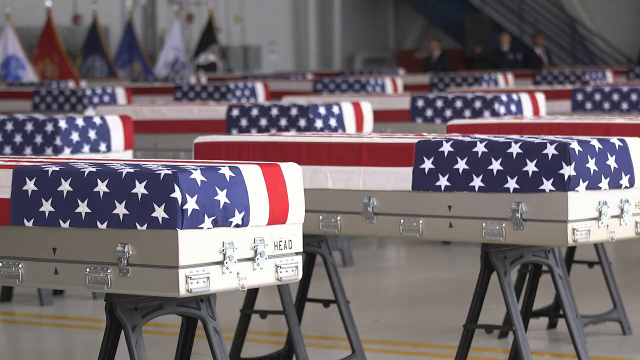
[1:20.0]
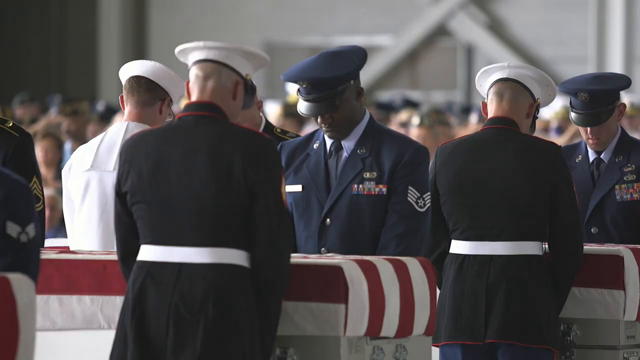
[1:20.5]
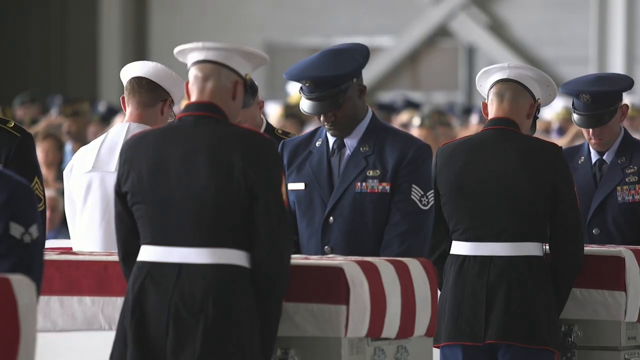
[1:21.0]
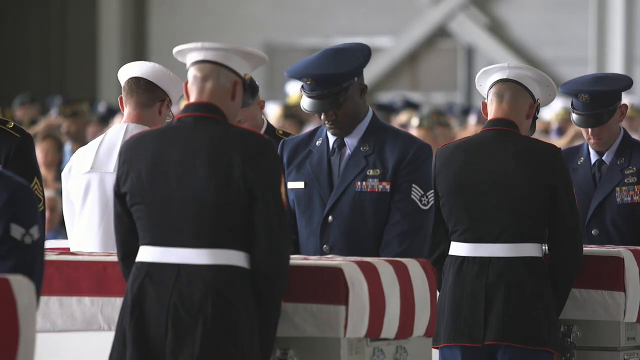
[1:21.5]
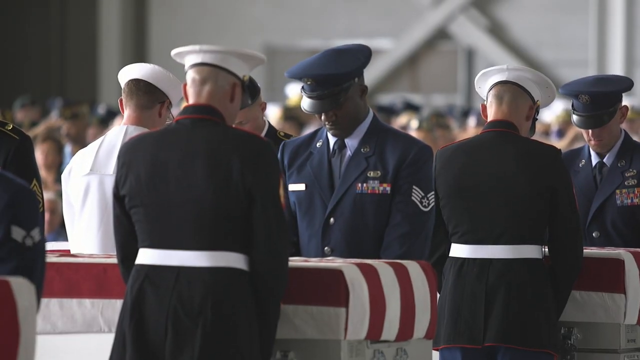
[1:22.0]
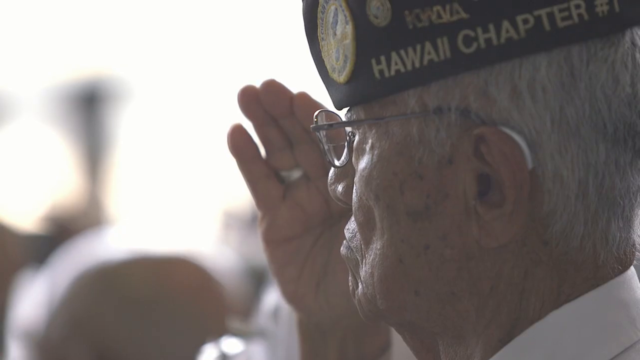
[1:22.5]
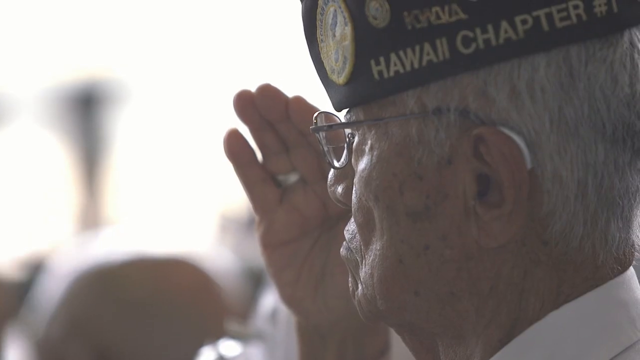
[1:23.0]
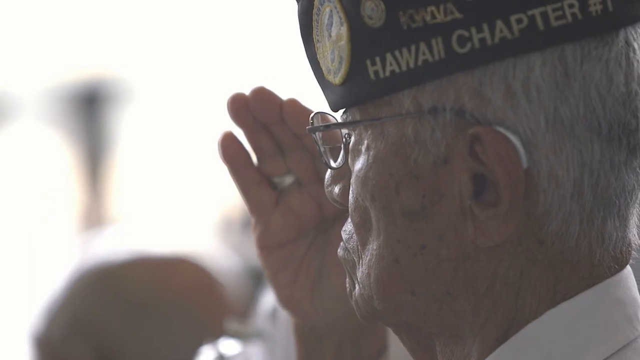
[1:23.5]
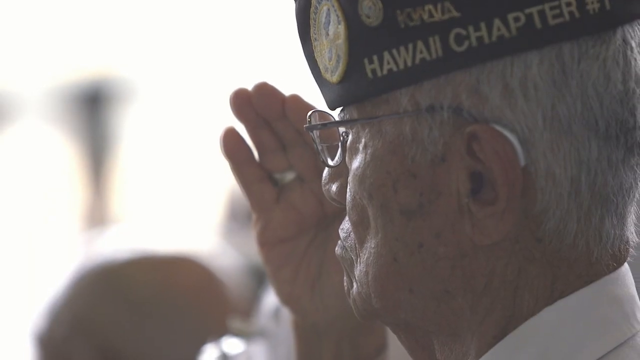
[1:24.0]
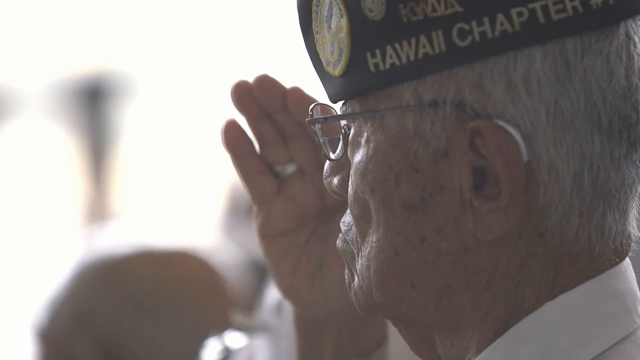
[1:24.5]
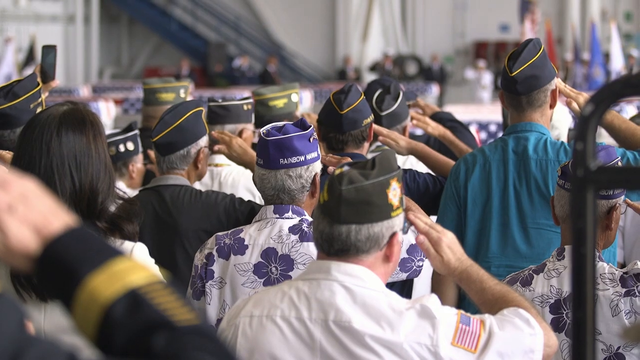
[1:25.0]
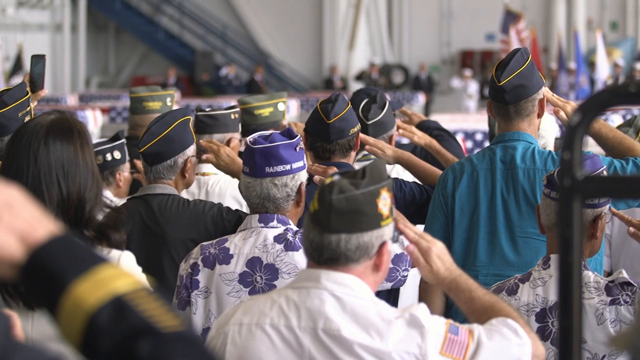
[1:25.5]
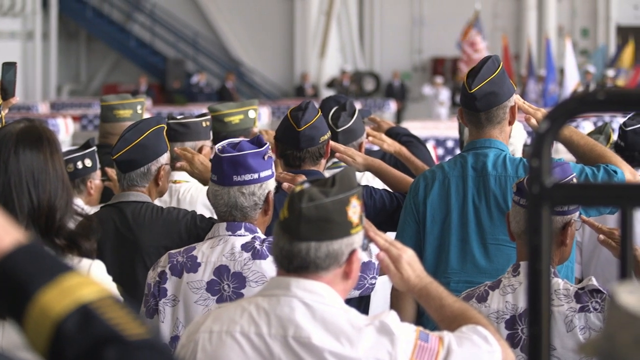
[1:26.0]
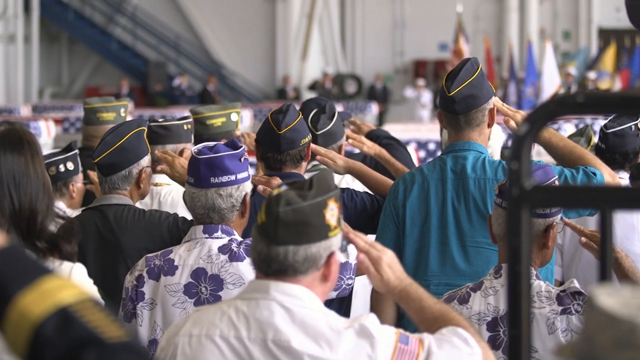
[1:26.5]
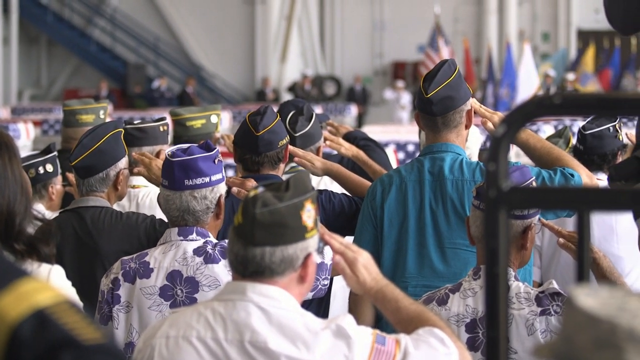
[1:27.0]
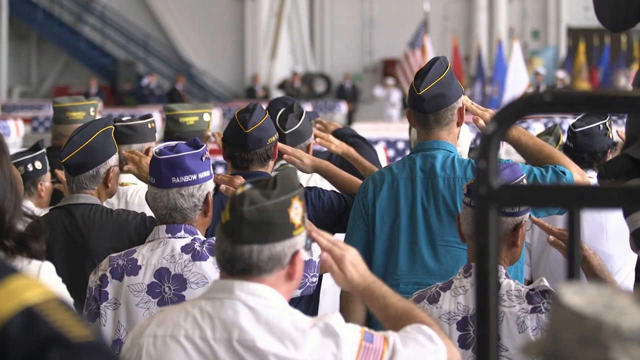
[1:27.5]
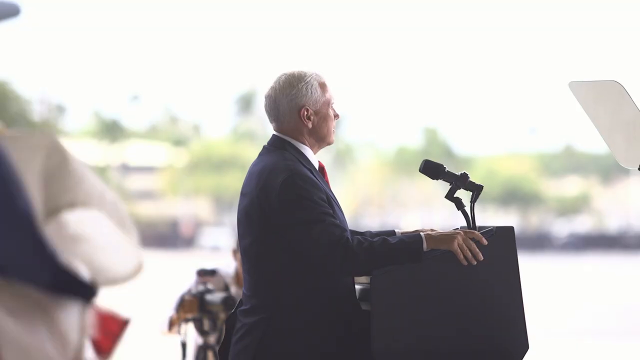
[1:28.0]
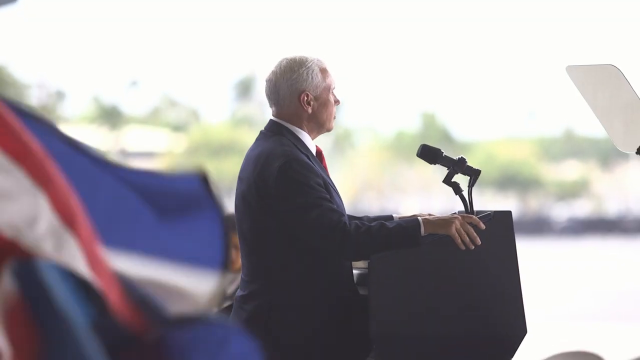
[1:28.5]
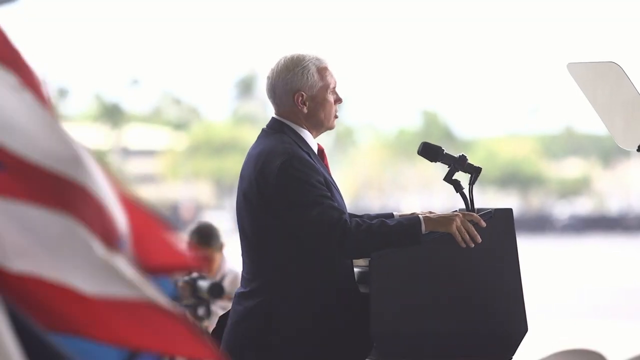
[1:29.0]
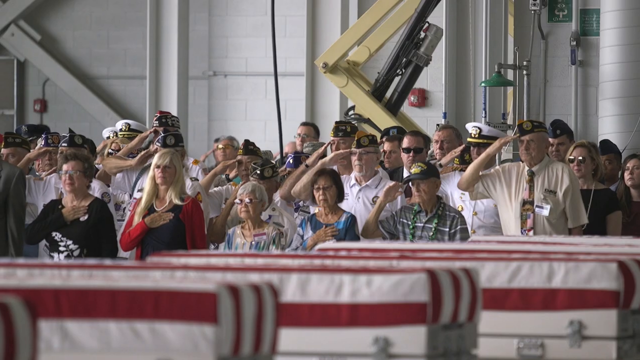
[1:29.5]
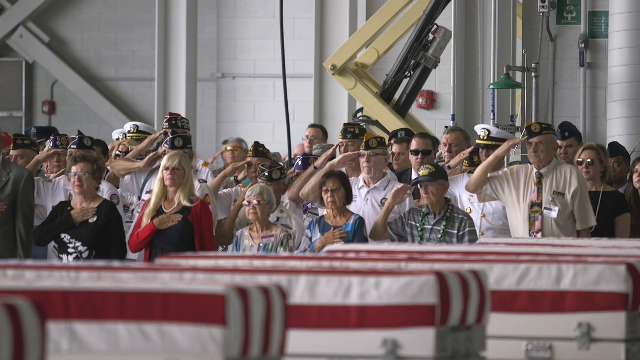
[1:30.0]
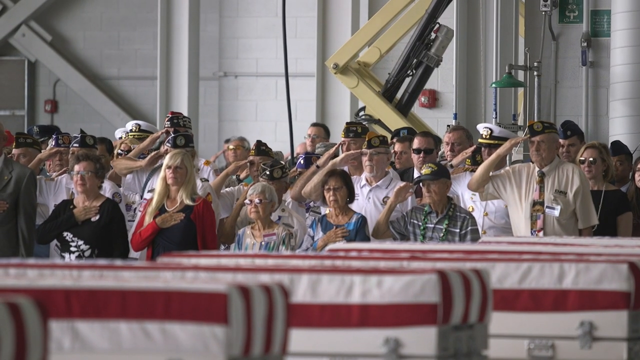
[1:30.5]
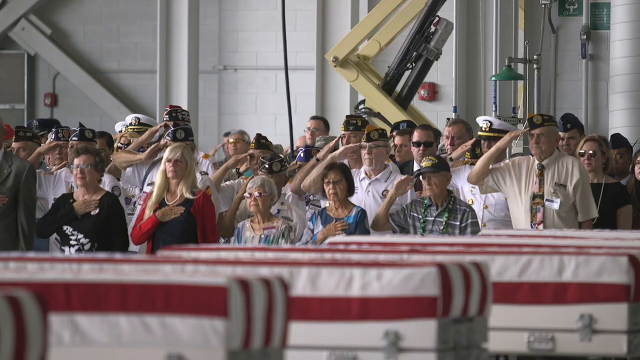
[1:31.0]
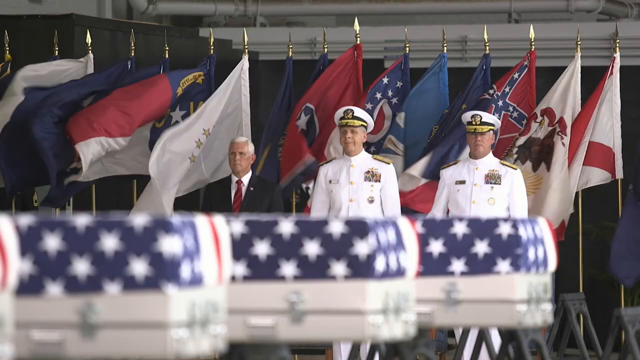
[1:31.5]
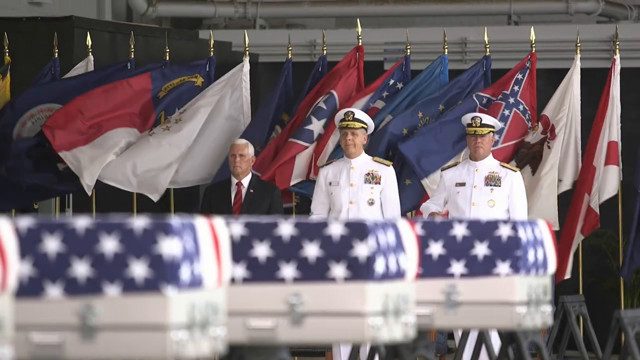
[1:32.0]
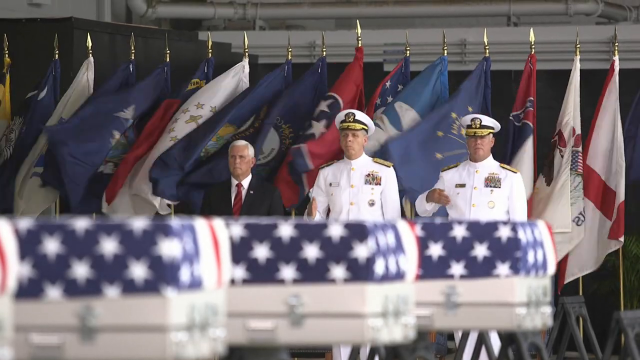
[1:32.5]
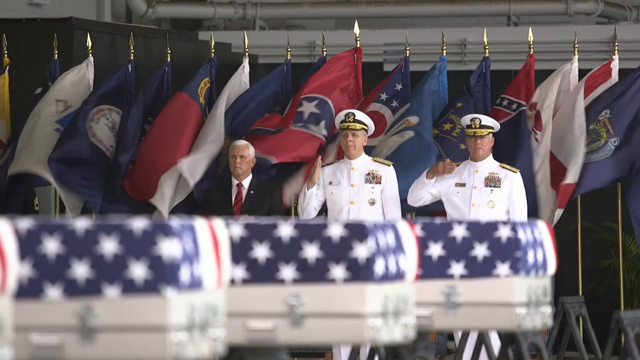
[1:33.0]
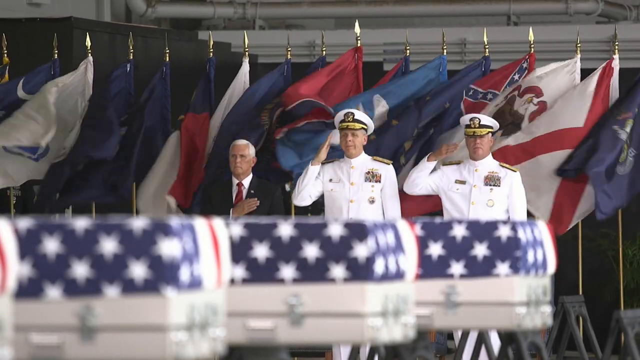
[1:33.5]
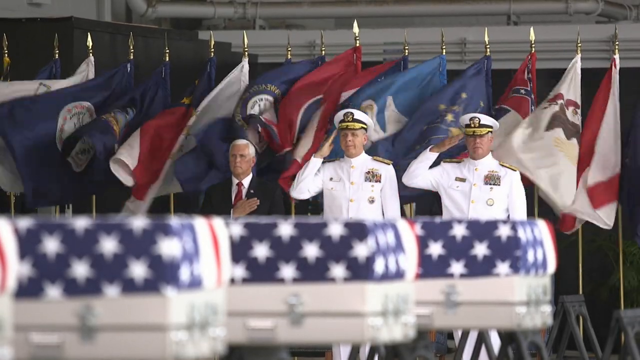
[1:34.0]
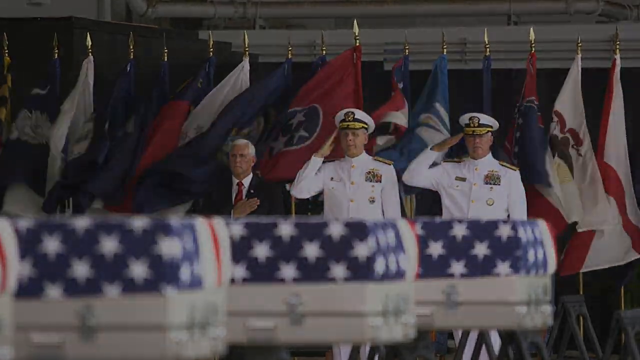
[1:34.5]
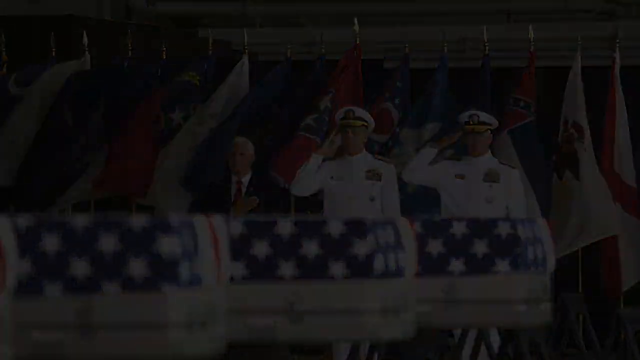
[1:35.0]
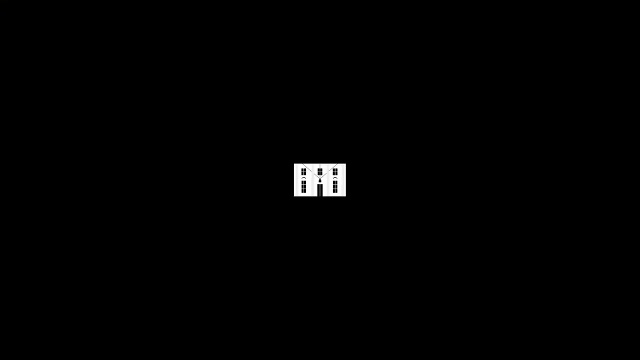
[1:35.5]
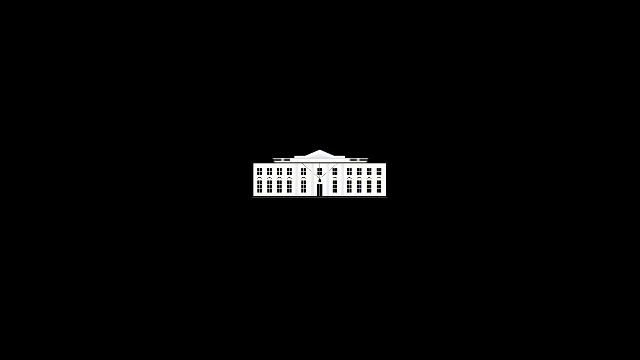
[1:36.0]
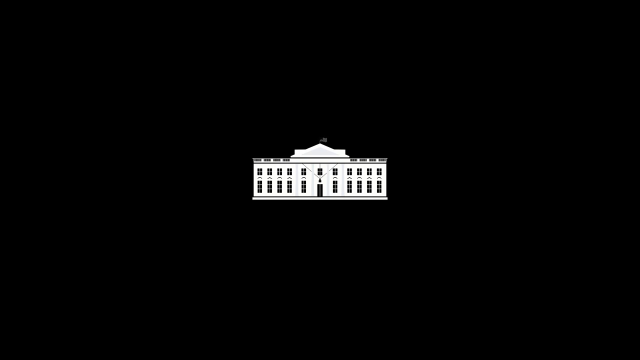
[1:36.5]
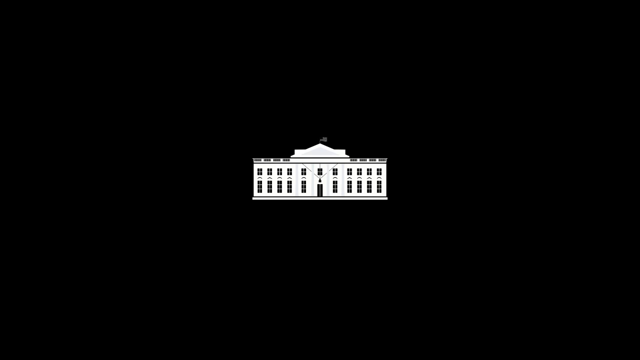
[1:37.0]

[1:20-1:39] People pay tribute near airplanes and cars at the airport where the airplanes landed. Military people pay tribute, some of them sitting in a hall. A figure of a man wears a black hat and a white scarf, with writing in white letters; he touches the brim of his hat with his right hand and appears to be wearing a white collared shirt. At a memorial service, a group of people in uniform salute, with caskets draped in American flags in the foreground. People take caskets off the airplane and bring them to a place like a hall. Men and women are everywhere. A man, likely a public figure, stands at a podium with a microphone; he has white hair and wears a blue shirt with a red tie, with several flags behind him, possibly governmental. Two men in white uniforms are seated to the left of the podium and another man in a dark uniform stands to the right. Behind the podium is a row of international flags, and a large airplane wing is visible in the background. Two people are seated in a shed; a big airplane is outside with another man, also military, standing there. Three men stand in a row on a stage: two in white naval uniforms and one in a black suit uniform. The two men in naval uniforms appear to be saluting. Finally, a picture of a house is shown.